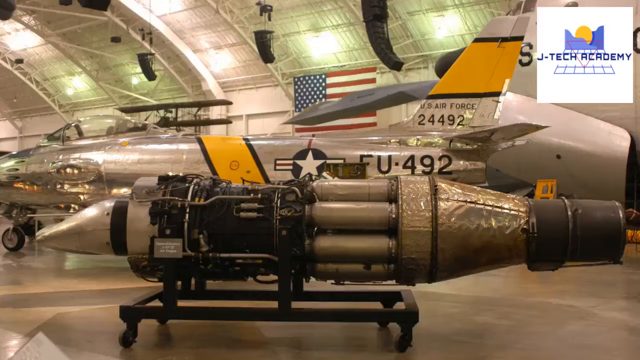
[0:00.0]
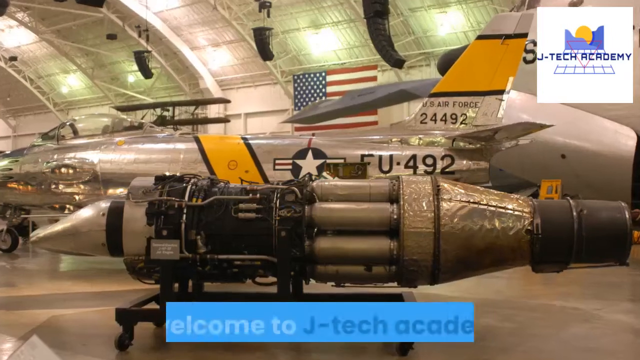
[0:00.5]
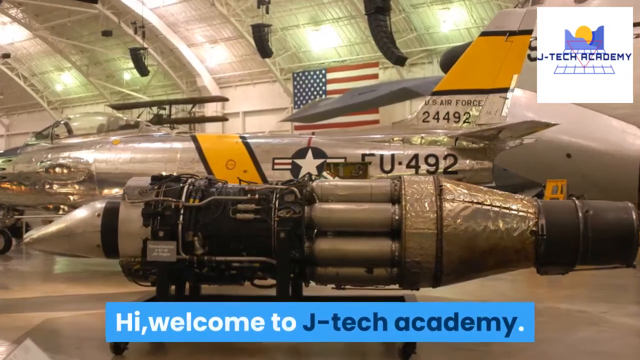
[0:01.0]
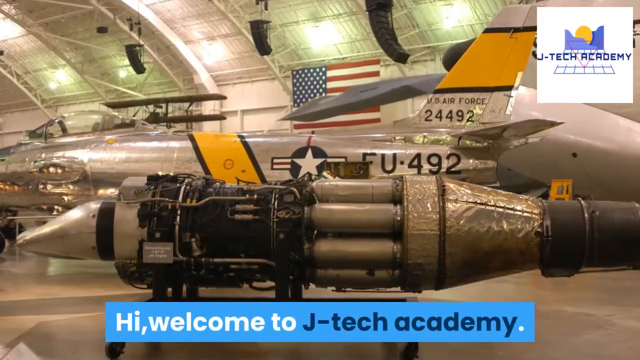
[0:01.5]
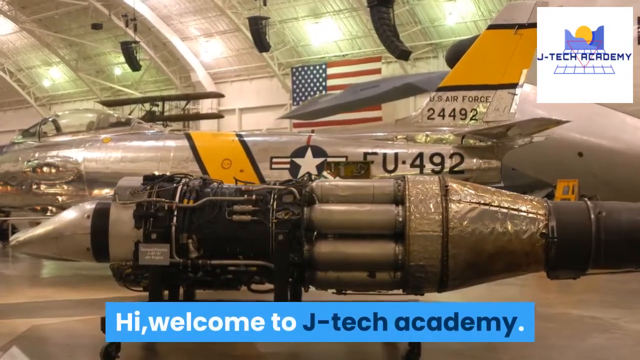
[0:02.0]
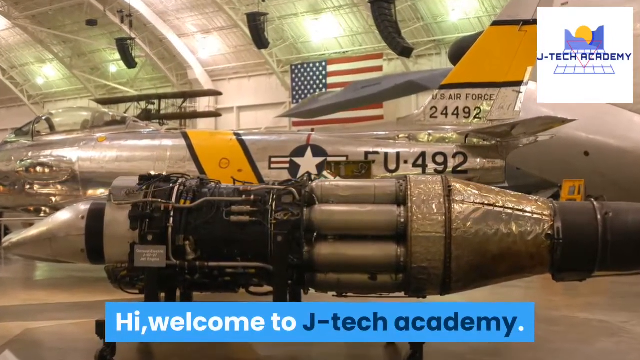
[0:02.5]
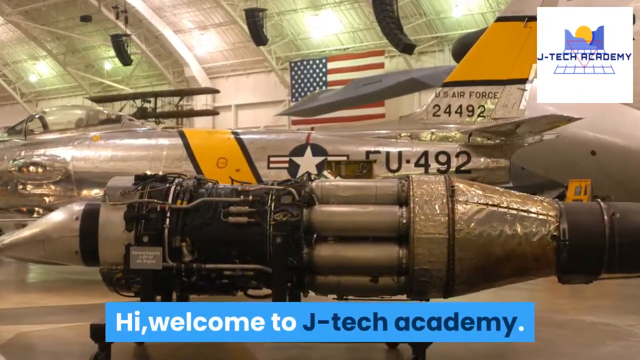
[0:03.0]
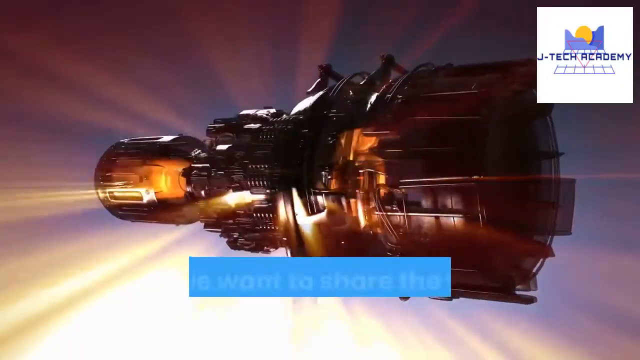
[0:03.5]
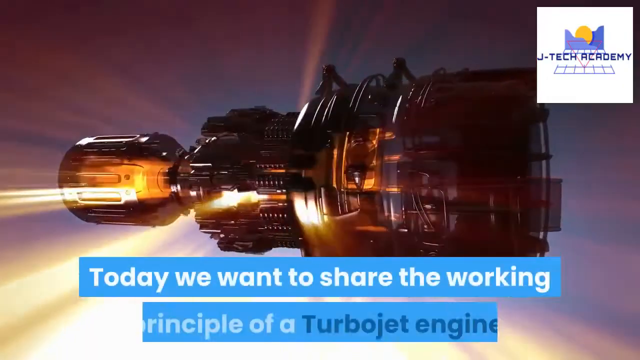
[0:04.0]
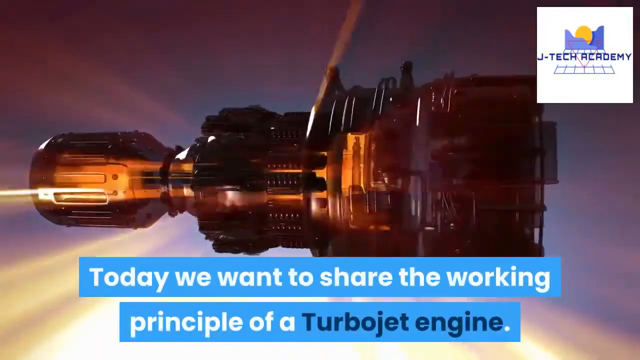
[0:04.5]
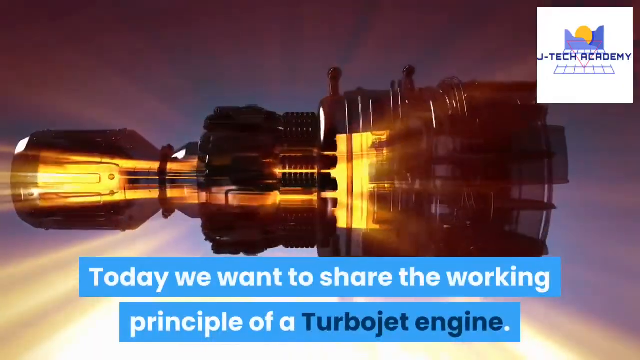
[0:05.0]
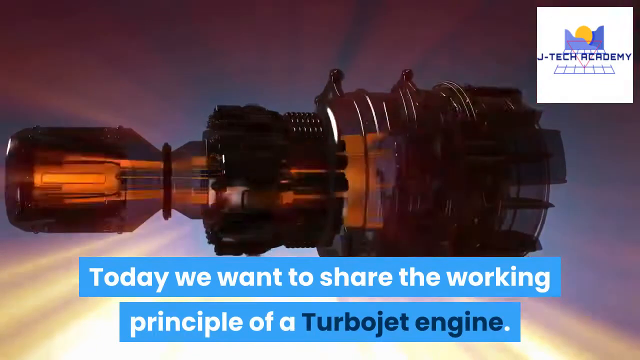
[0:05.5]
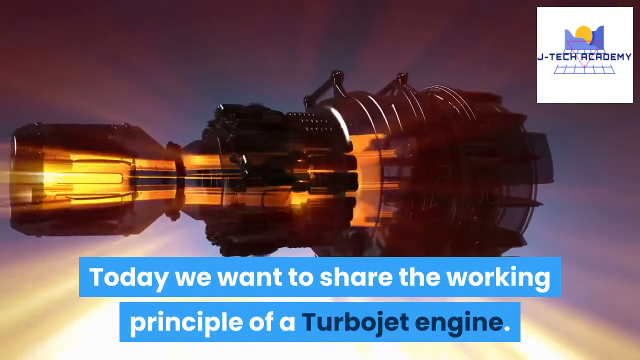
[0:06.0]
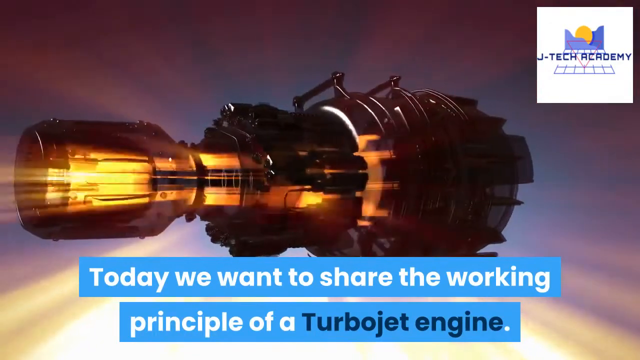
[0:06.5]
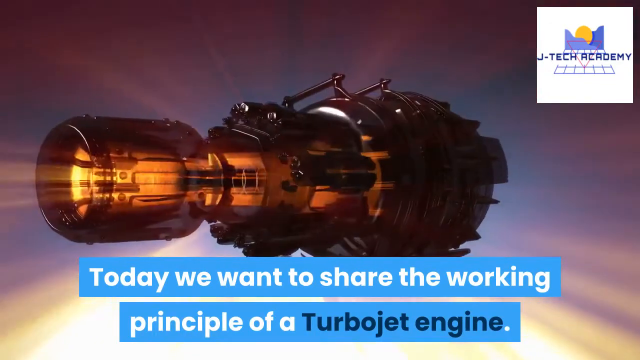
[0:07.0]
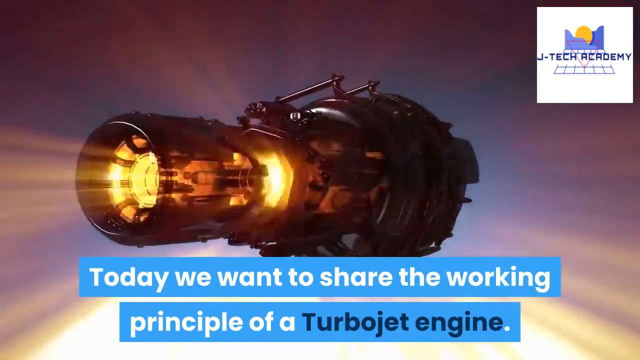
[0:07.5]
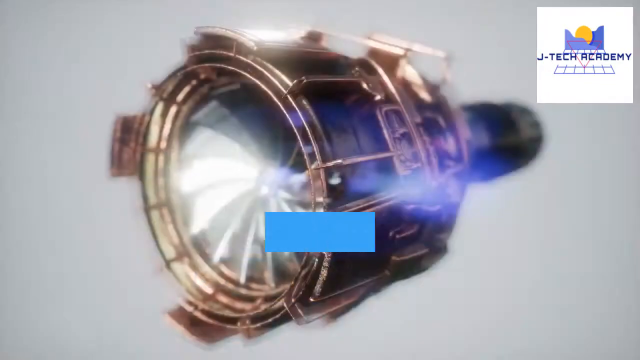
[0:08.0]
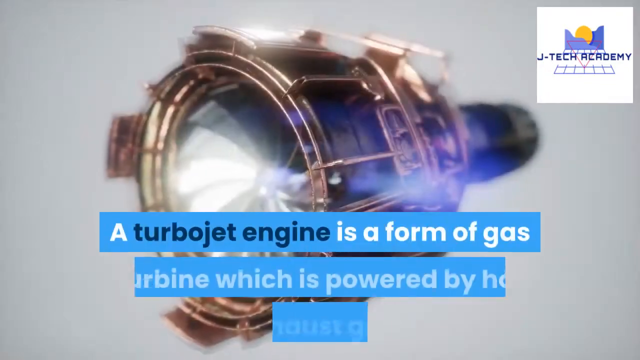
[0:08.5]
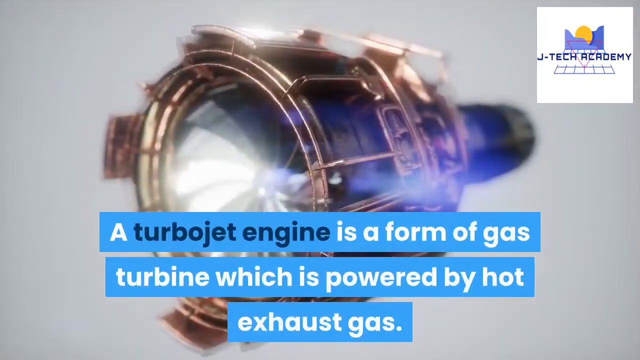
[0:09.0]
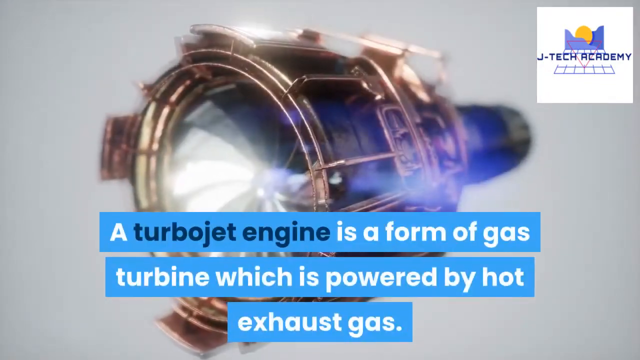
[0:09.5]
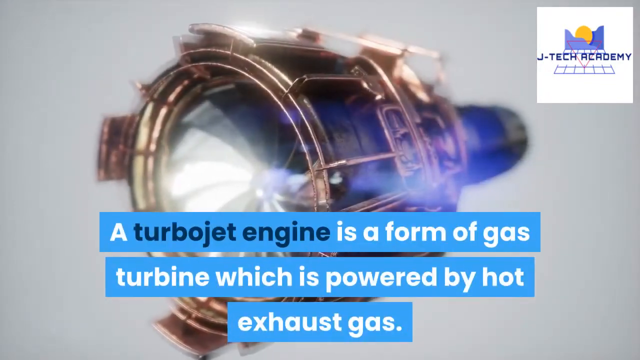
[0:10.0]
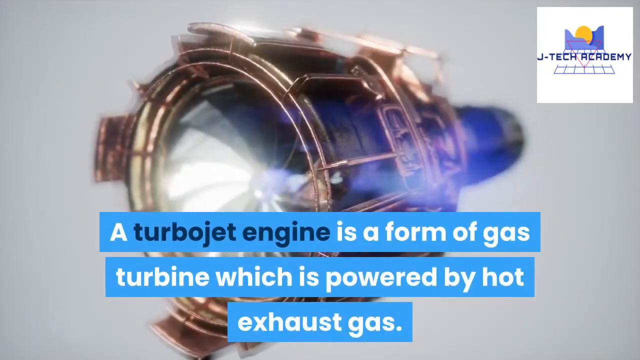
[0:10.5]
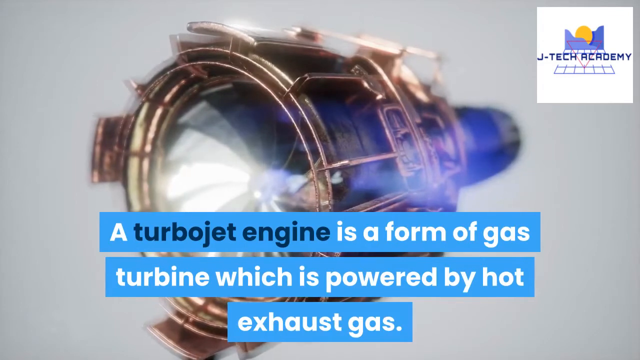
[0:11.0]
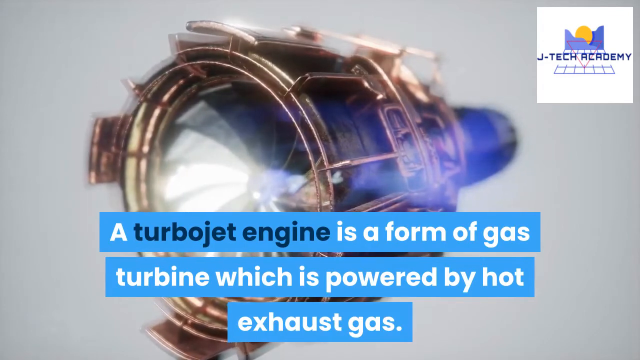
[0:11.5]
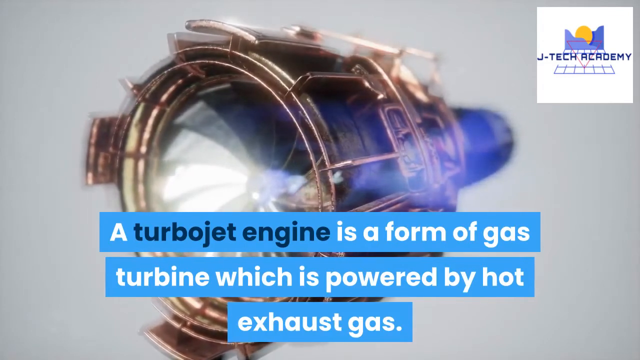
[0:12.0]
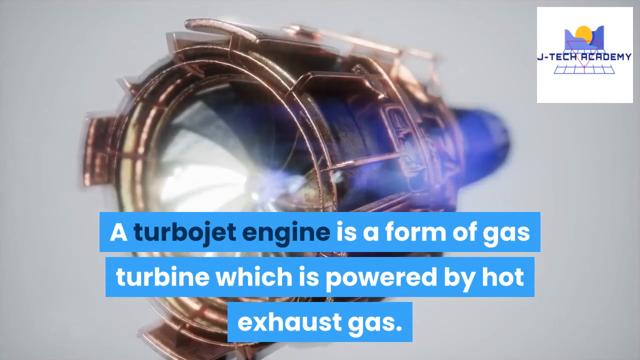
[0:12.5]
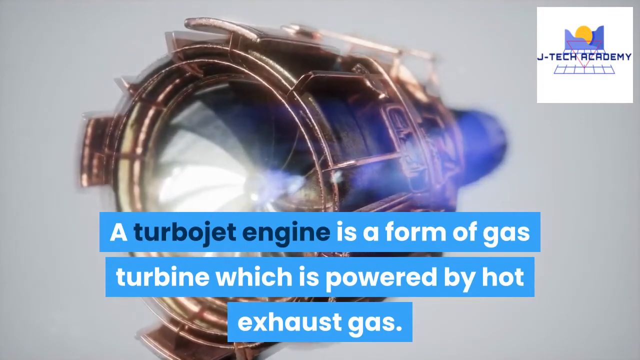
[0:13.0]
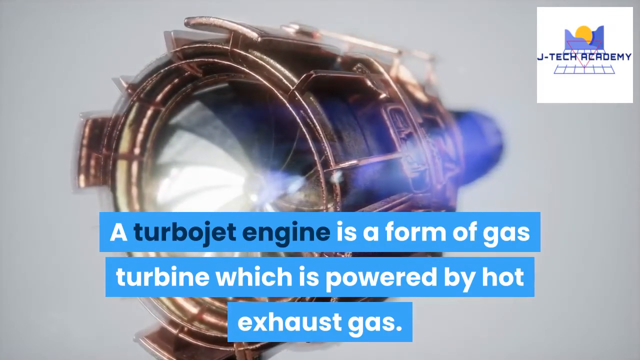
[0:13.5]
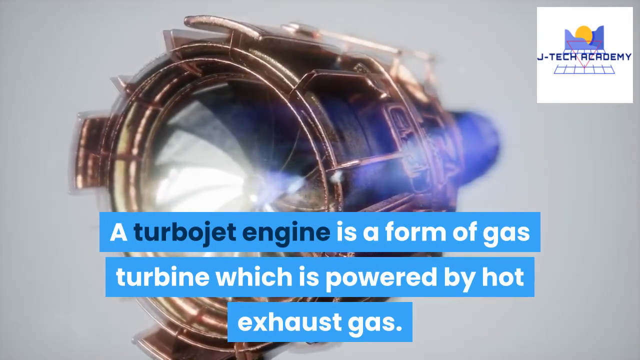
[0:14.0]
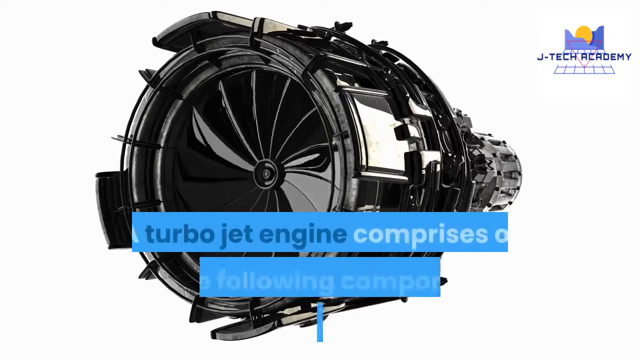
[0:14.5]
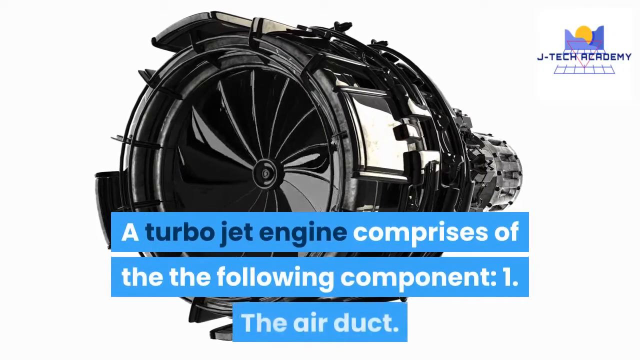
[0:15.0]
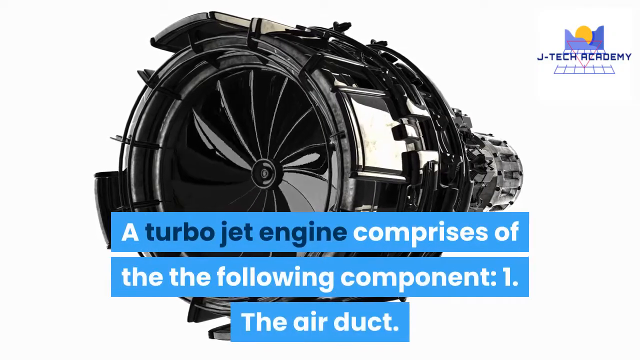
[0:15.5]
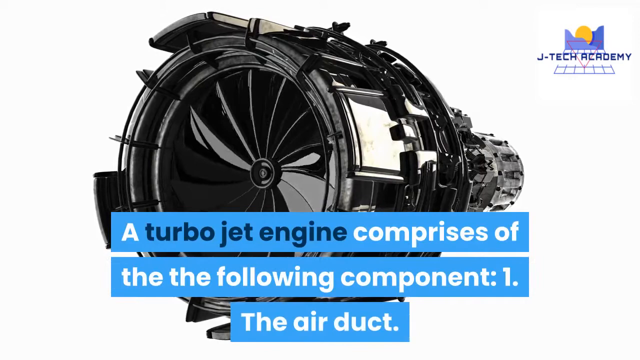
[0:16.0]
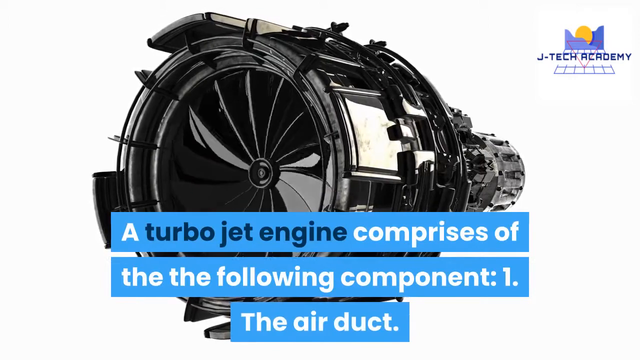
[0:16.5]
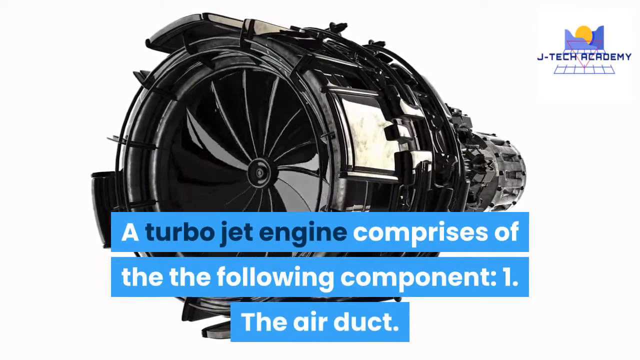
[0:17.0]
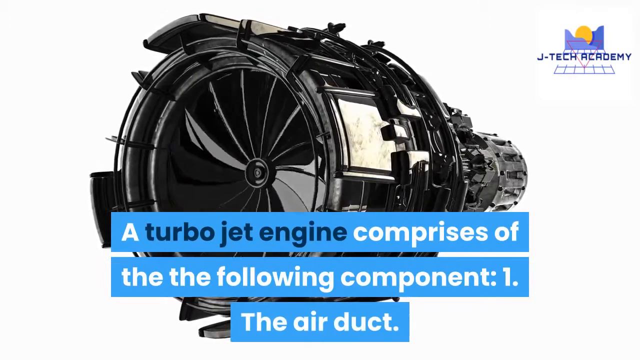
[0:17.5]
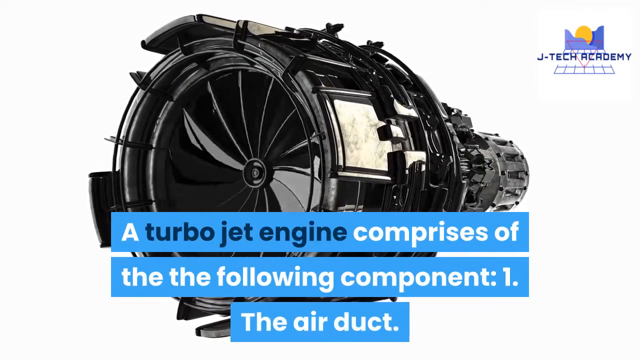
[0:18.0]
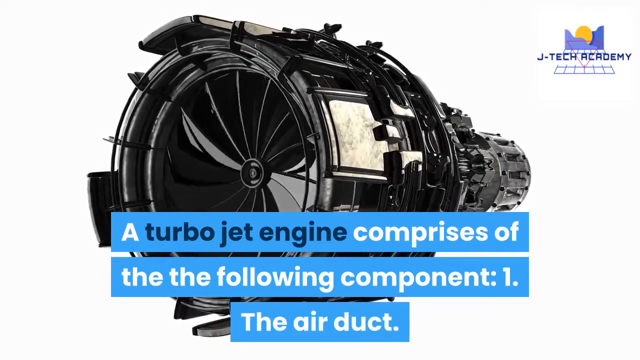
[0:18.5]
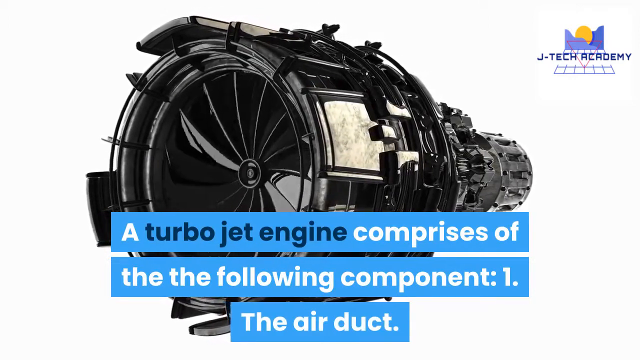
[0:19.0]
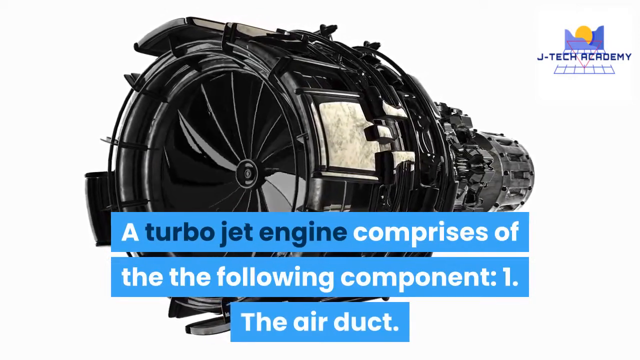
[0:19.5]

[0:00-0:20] The video is set in a big air hangar that looks like some kind of museum of military fighter planes. A logo reading "UTEC Academy" is in the top right-hand corner of the screen, and text at the bottom says "hi welcome to JTEC Academy." The camera zooms in on the fighter jet. The screen then changes to an animation of an engine, swirling around, with text at the bottom reading "today we want to share the working principle of a turbojet engine." After the engine turns, a different image of an engine appears, moving slightly. Text states that "a turbo engine is a form of gas turbine which is powered by hot exhaust gas." The picture changes to a black animation of an engine, and the text reads "a turbojet engine comprises of the following component one the air duct"; the air duct is the part that looks like a giant fan.